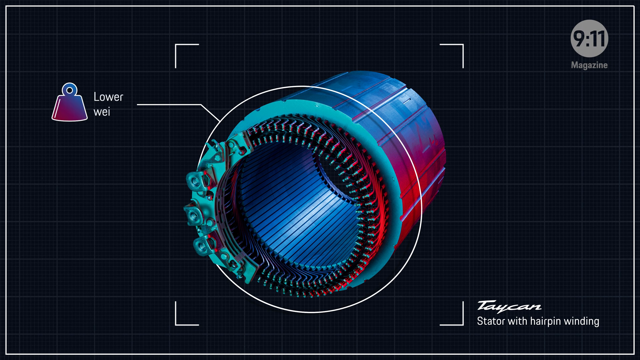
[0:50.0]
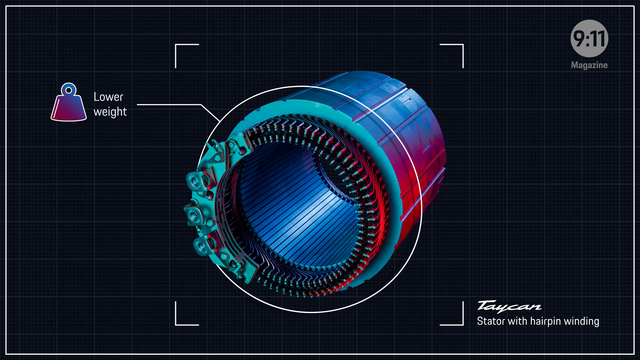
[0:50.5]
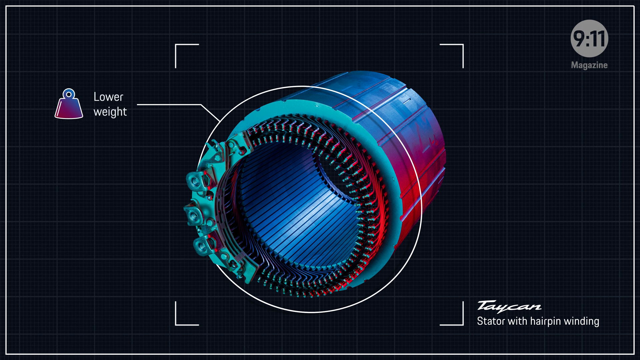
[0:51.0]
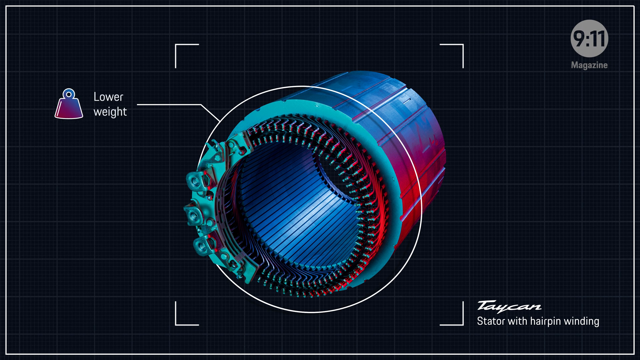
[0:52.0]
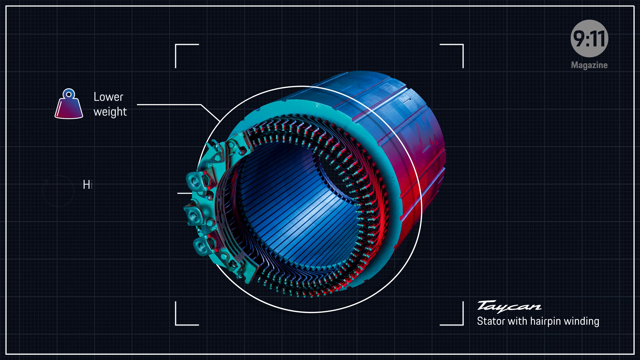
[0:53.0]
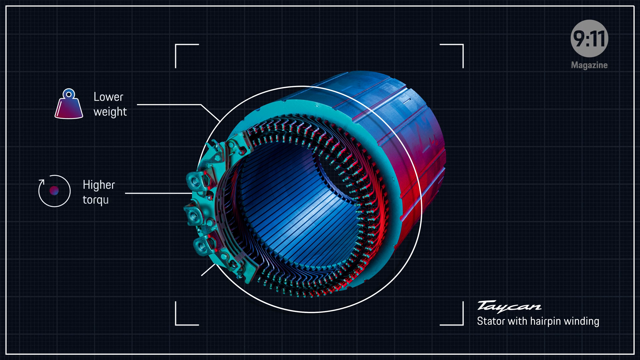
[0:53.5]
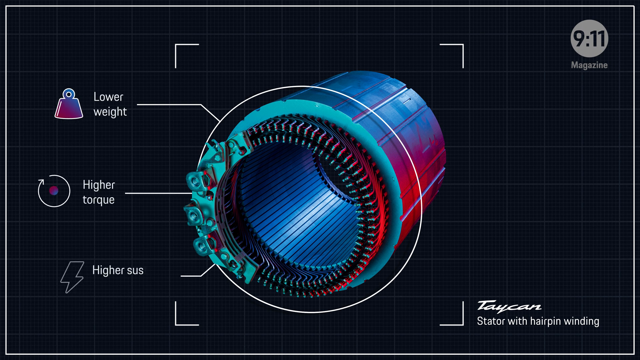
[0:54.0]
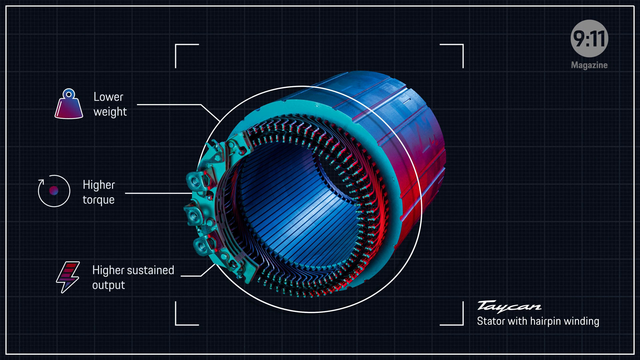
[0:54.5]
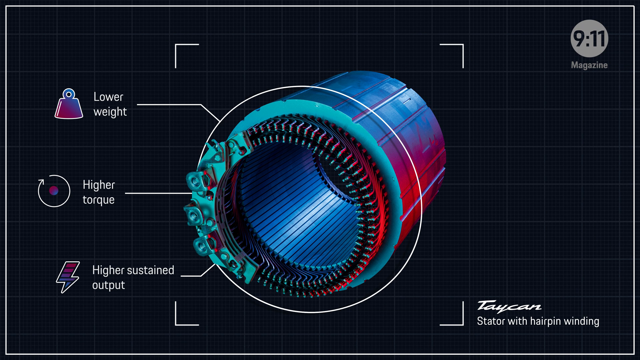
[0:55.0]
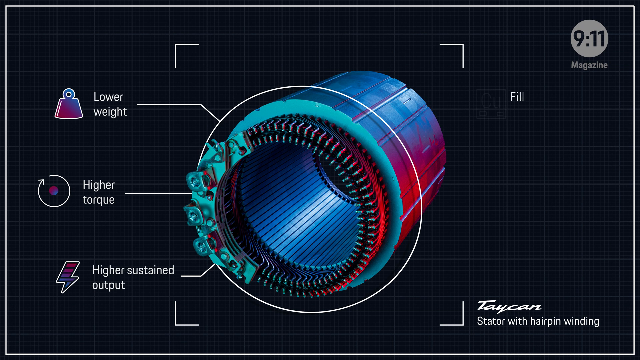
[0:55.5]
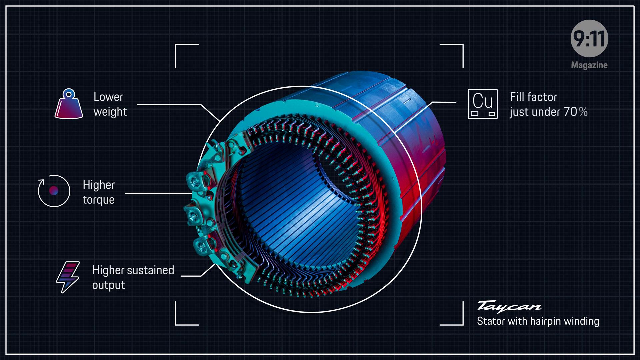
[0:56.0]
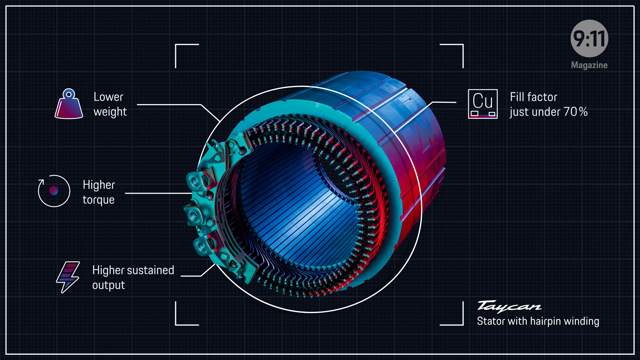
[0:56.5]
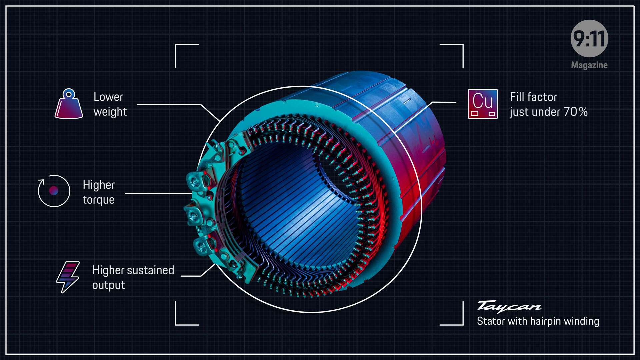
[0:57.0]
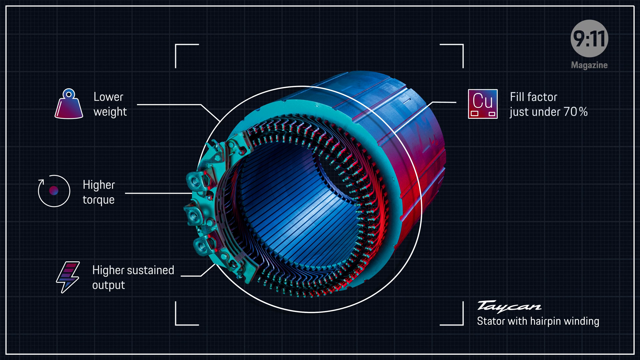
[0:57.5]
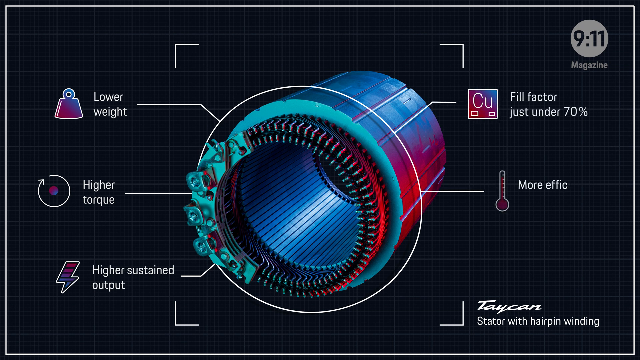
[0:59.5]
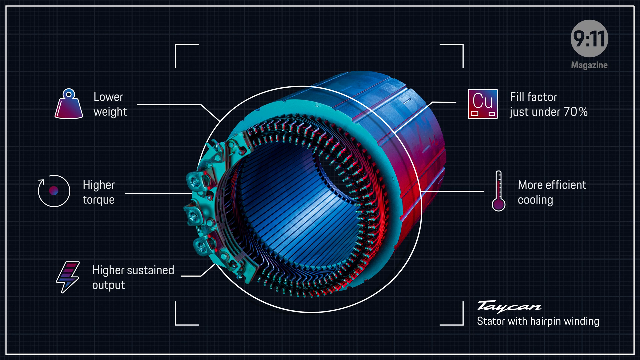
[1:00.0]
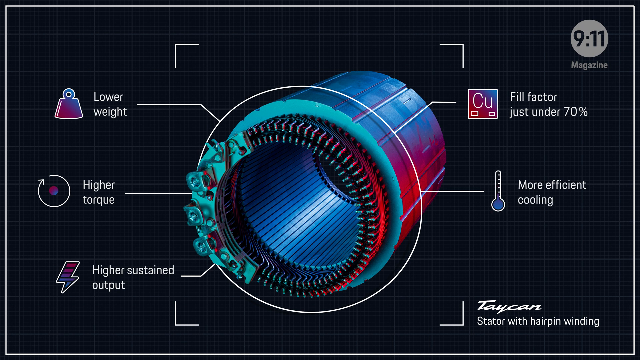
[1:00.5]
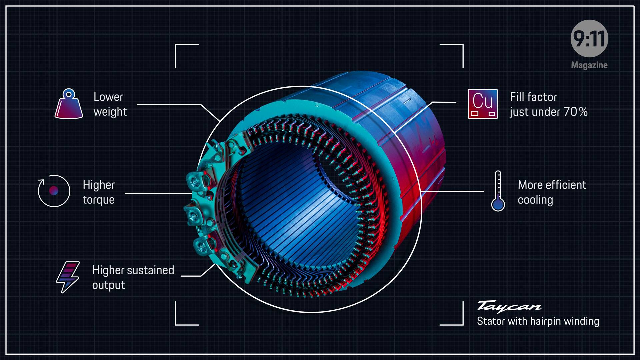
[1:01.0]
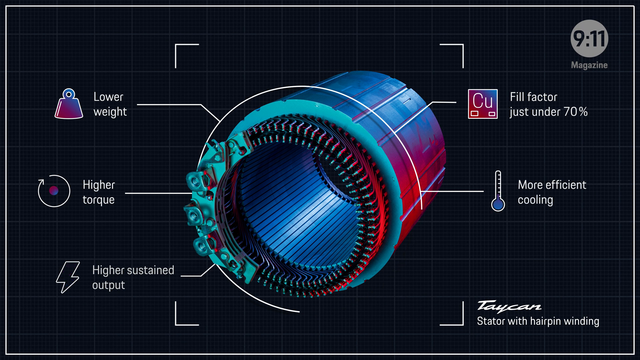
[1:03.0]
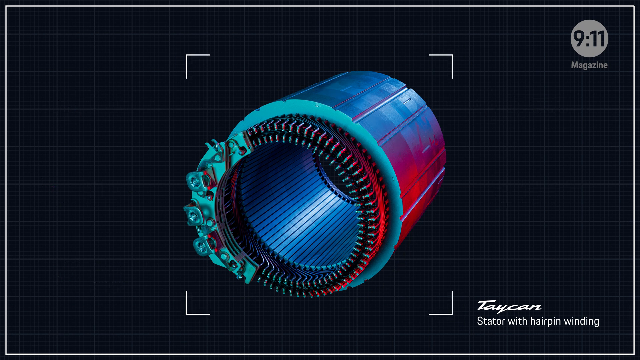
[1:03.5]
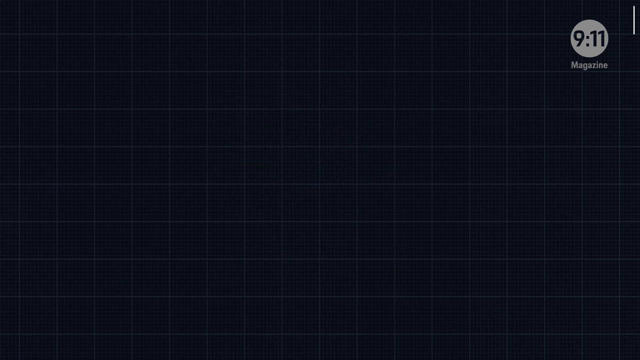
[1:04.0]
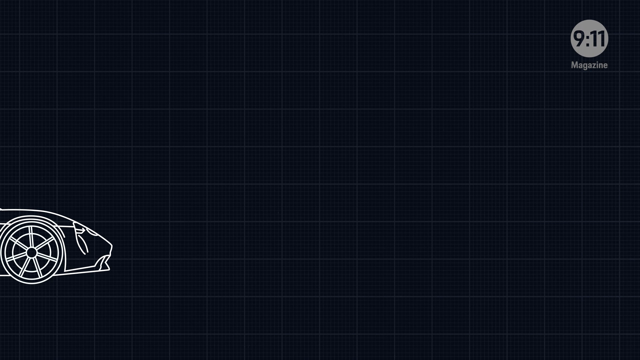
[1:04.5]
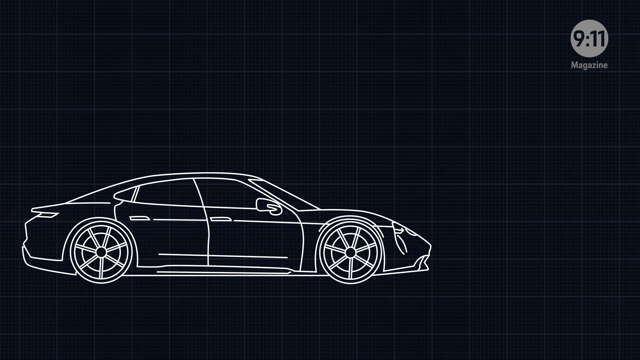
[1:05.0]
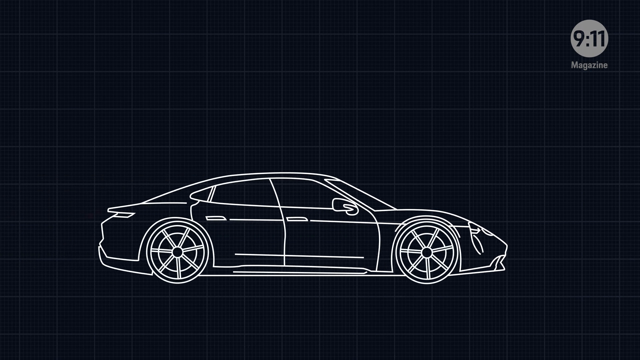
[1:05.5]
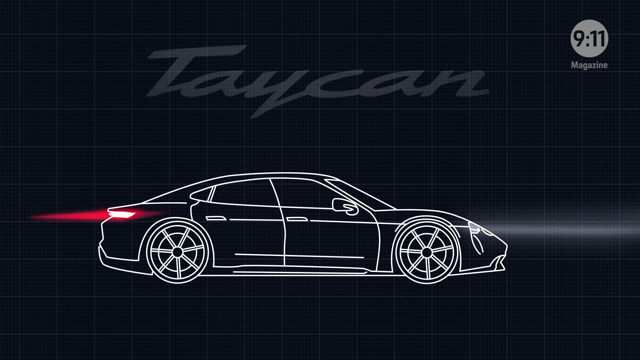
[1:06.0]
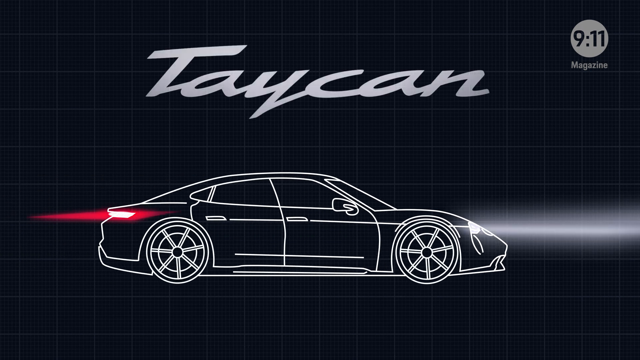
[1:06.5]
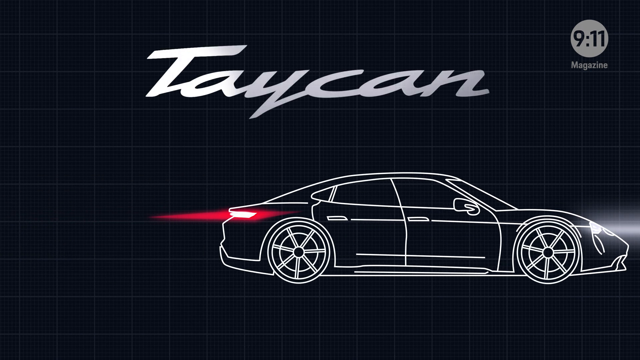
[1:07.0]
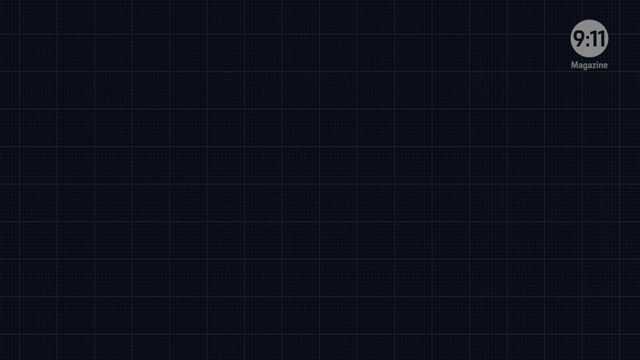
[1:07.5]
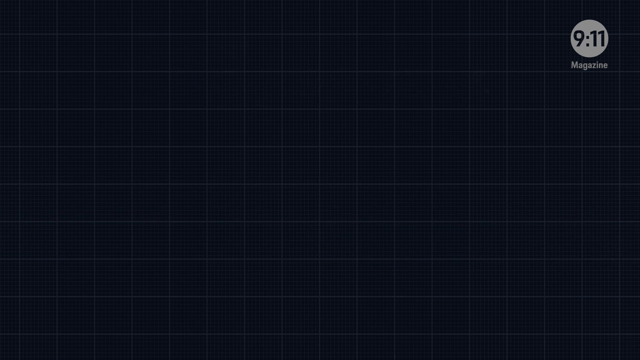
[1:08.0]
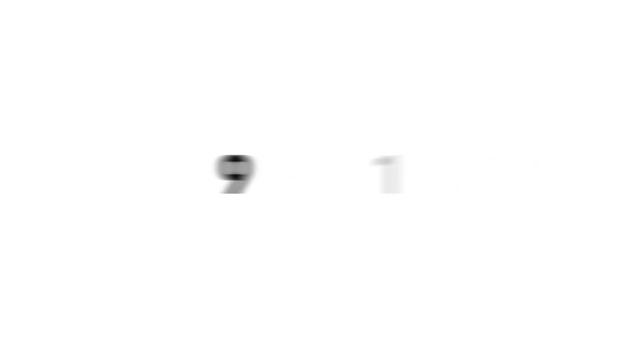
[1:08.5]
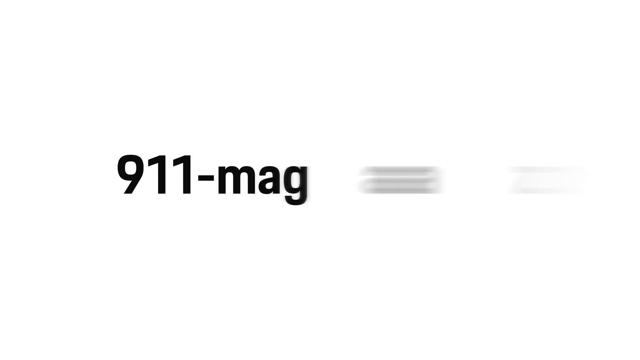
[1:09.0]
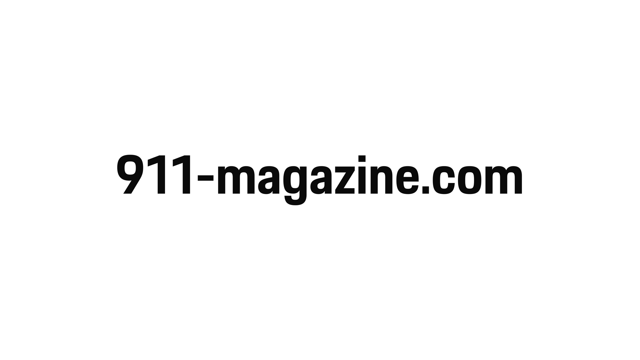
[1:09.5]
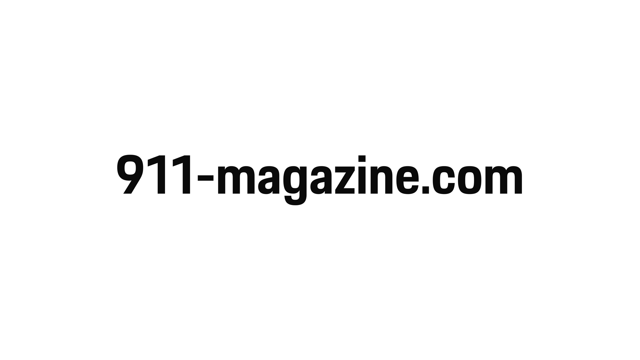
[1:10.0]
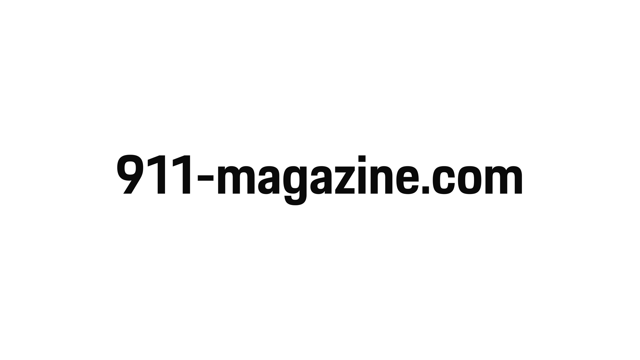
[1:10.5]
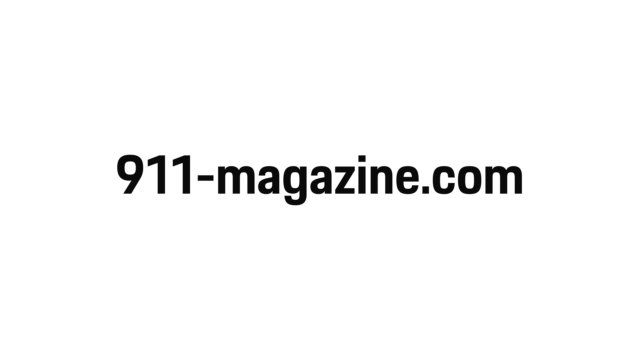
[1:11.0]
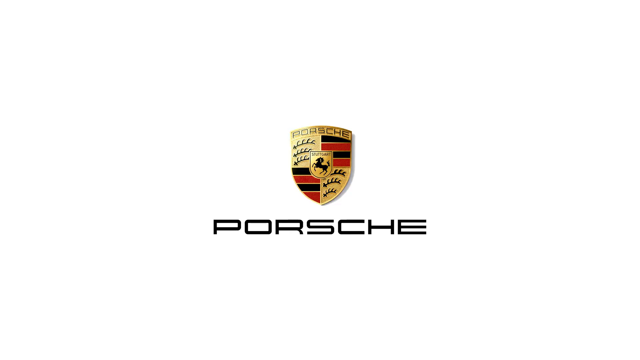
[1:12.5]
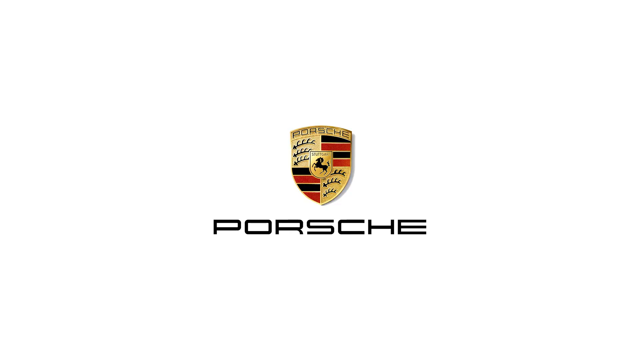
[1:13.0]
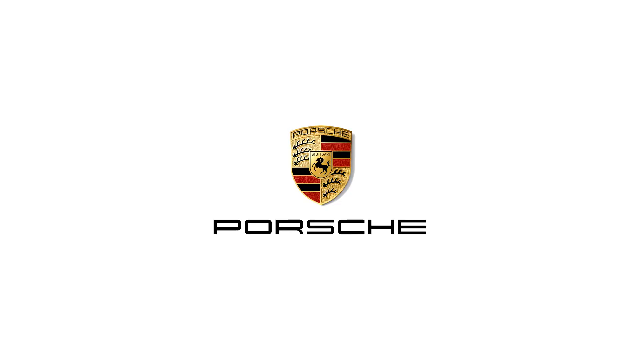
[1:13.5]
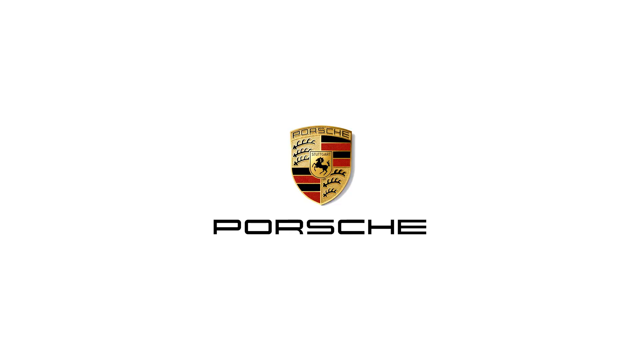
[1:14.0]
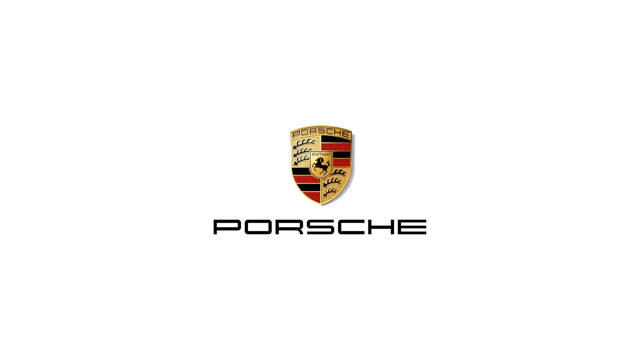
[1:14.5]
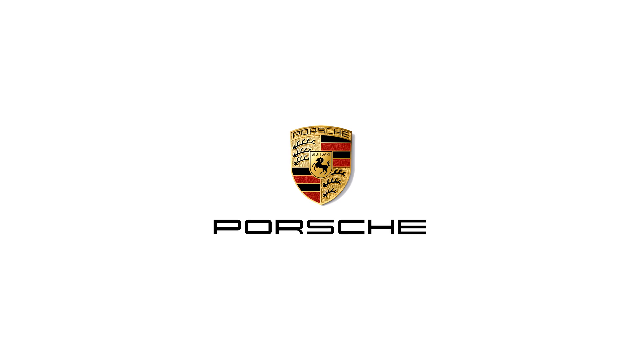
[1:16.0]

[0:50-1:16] Text appears mentioning "higher sustained output", a fill factor, and more efficient cooling. A logo is shown, and then a car, with the word Taycan written. Text reads "911.com", and there is a Porch logo in red, black and maroon. The car approaches while facing east and accelerates. A setting is displayed in a small square box. The stator with the hairpin winding looks like a wheel: it is round, but not short like a wheel. The pins are so many that they cannot be counted. Text keeps appearing in red, such as fill factor under 70 percent, and after that more appears, such as efficiency.